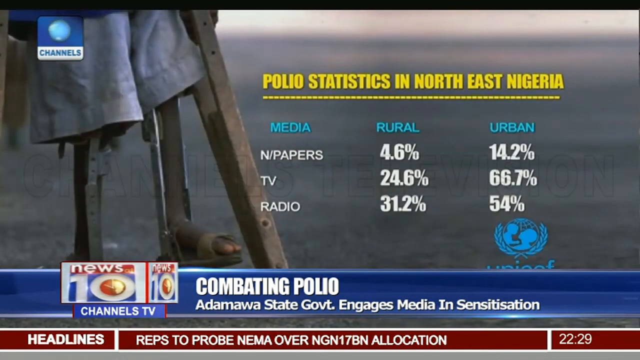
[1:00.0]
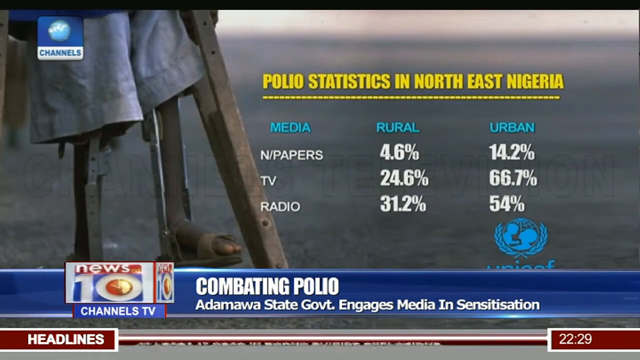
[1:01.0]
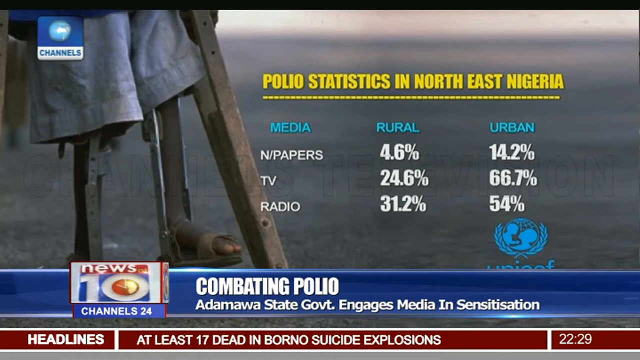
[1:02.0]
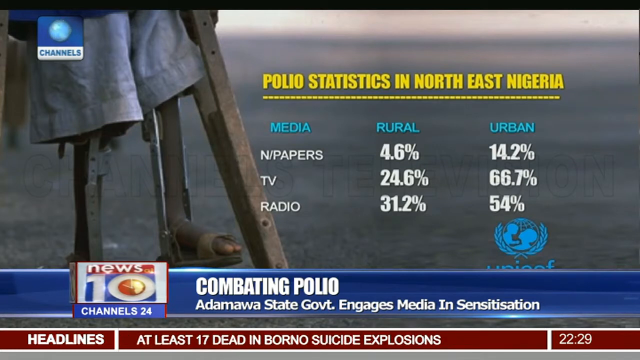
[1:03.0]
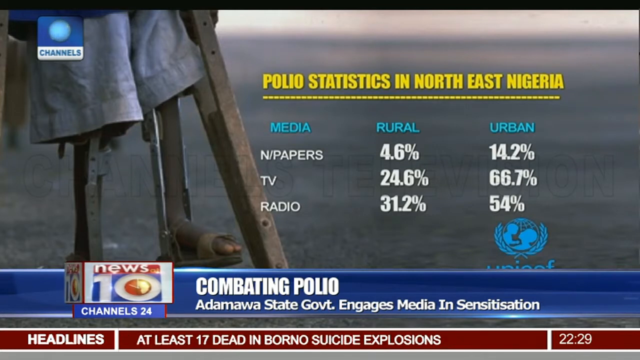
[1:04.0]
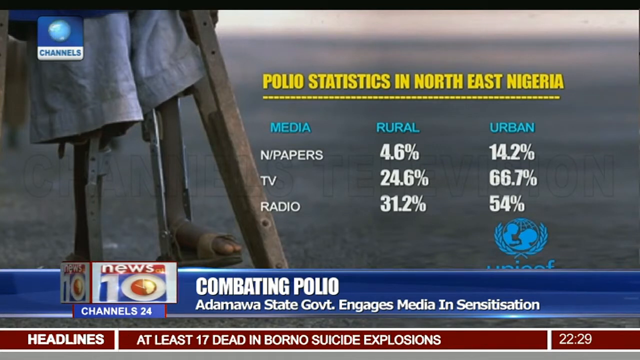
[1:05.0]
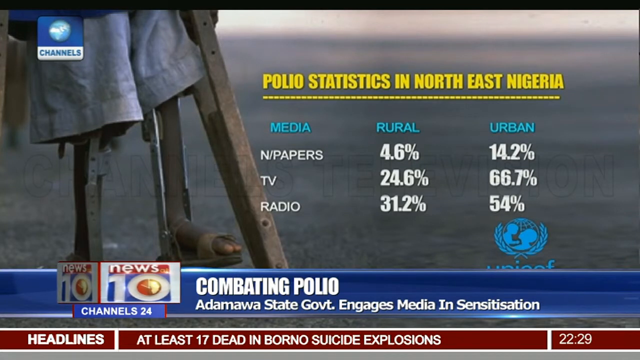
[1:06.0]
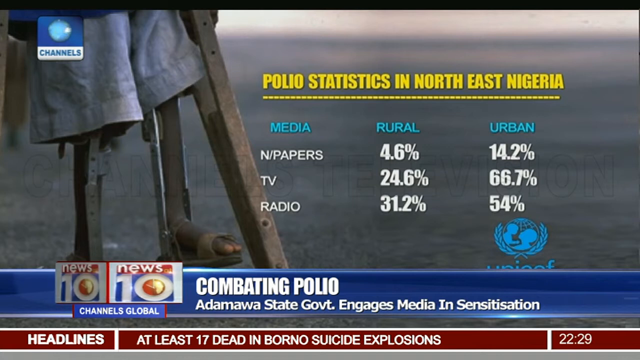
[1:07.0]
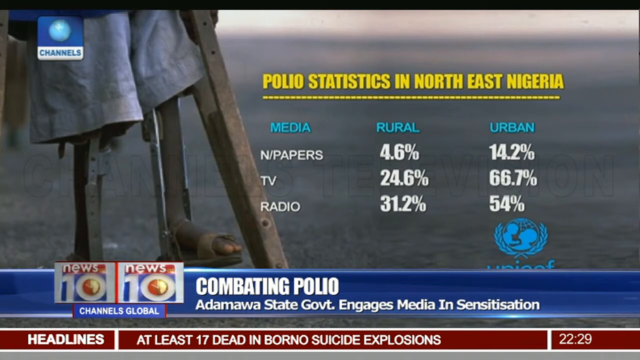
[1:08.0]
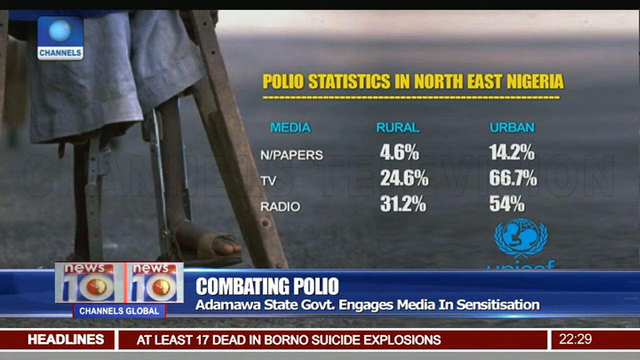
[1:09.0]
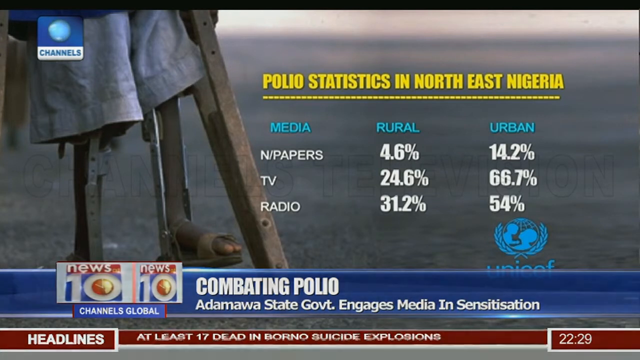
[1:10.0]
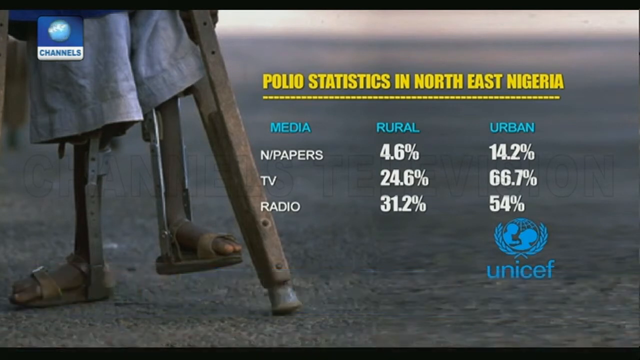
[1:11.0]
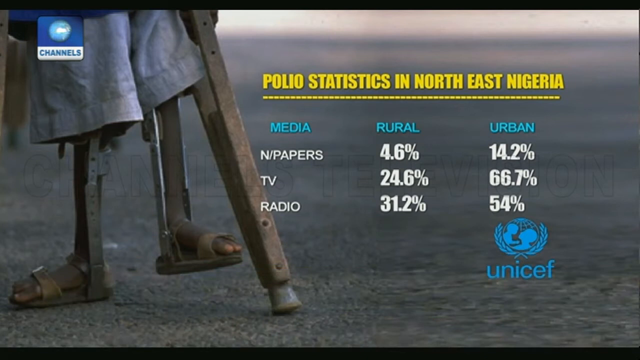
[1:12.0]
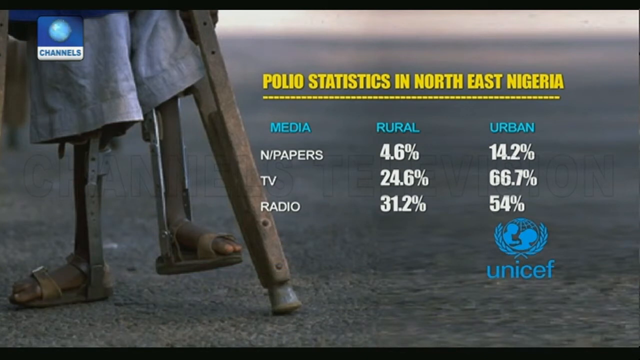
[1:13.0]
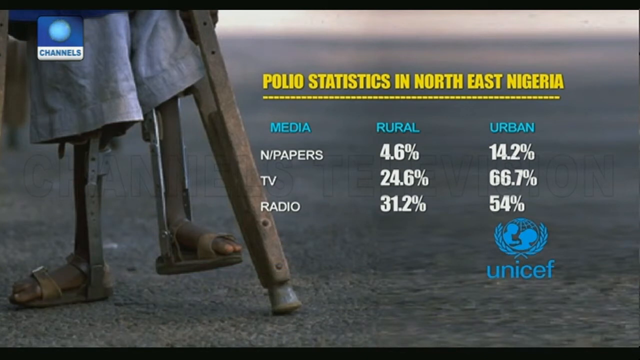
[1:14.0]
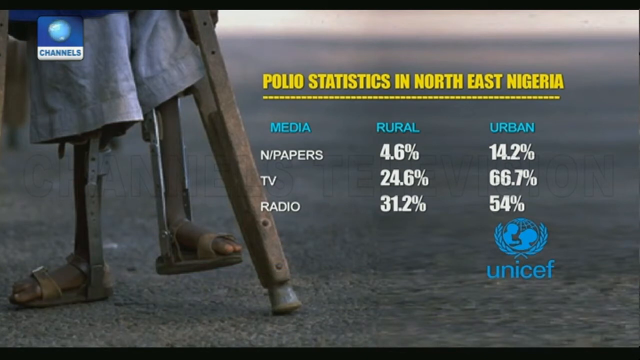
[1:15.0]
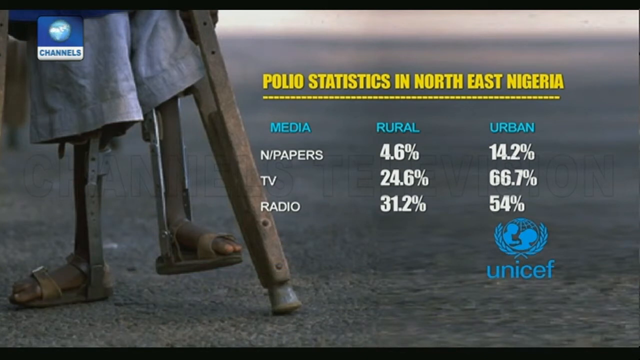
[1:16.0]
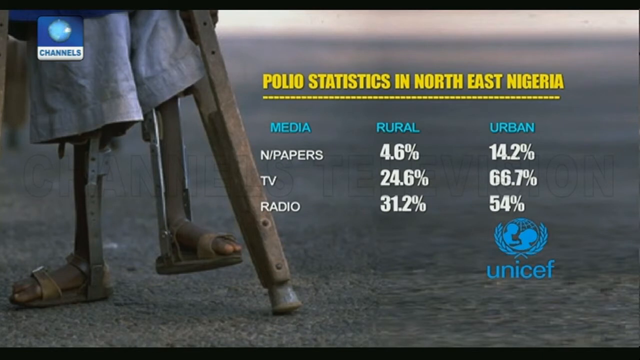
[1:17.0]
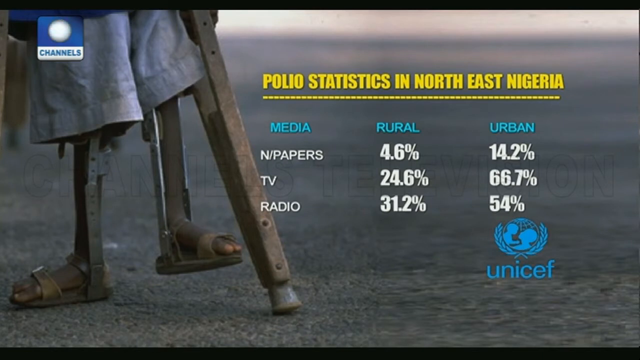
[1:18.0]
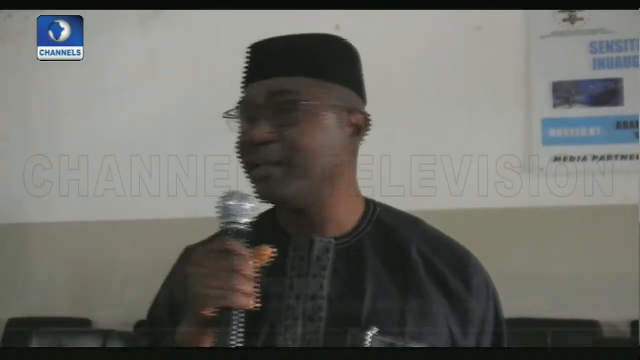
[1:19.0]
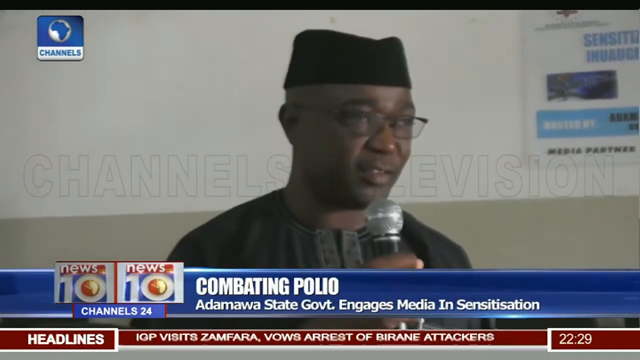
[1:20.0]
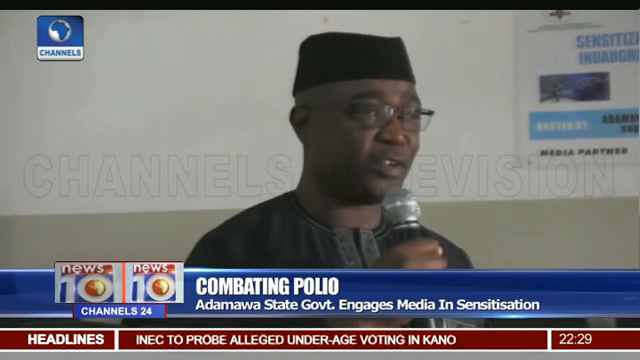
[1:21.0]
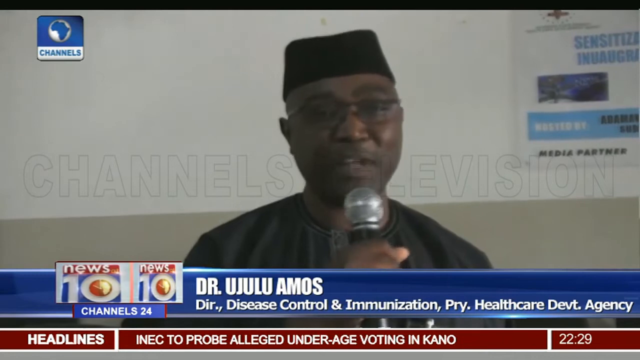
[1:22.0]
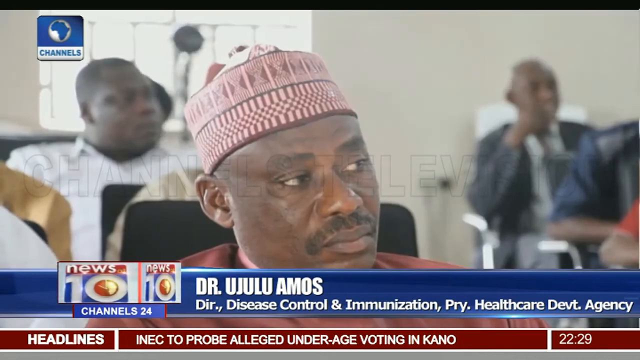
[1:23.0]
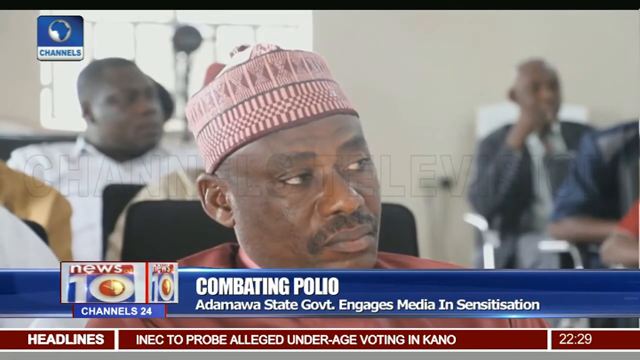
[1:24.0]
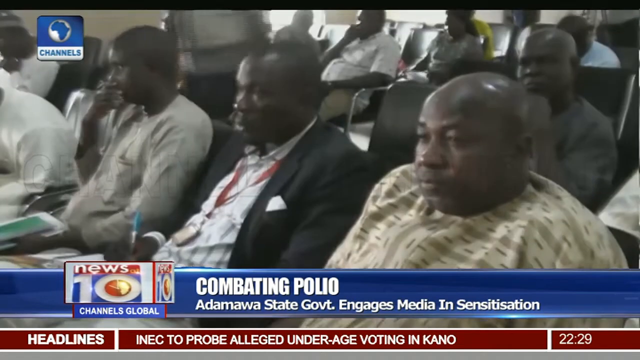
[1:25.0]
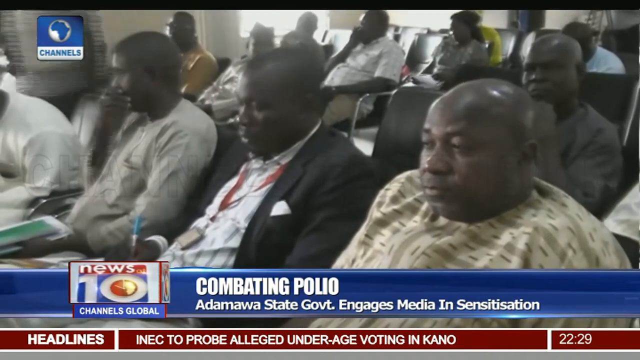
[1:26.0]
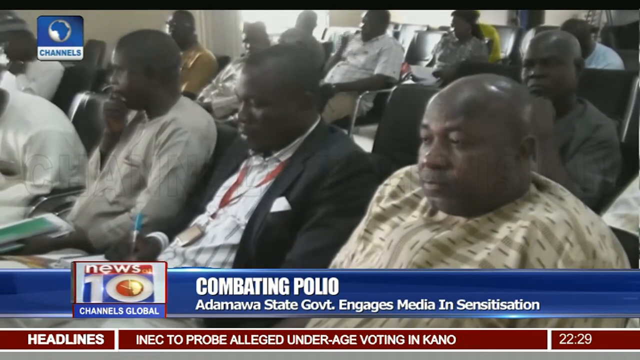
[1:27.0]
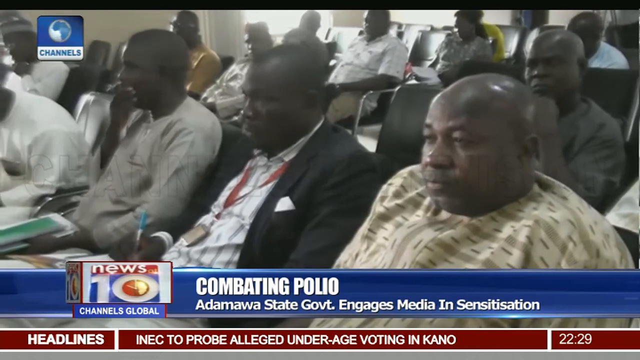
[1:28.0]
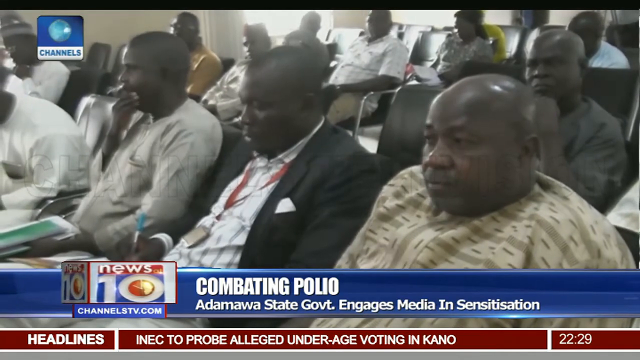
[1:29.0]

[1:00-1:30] The report continues with statistics for northeast Nigeria, showing the media in Rwola and Eben. A doctor, Ujolwa, explains to people who are listening and paying attention. Media figures are given: TV at 24.6 and Eben at 67; newspapers at 4.6 and Eben at 40.2; radio at 31.2 and Eben at 54%. The headline reads "combating polio," from the Atamawa state government, which engages the media in sensitization, with the news attributed to UNICEF.